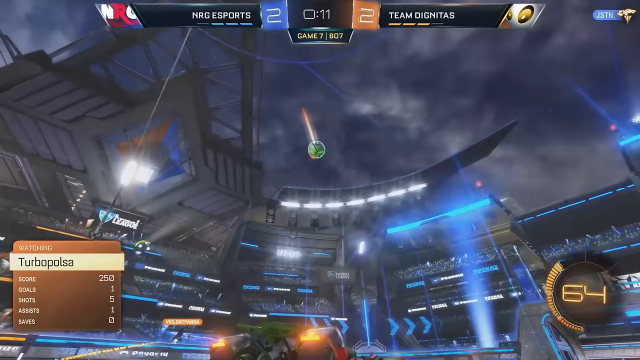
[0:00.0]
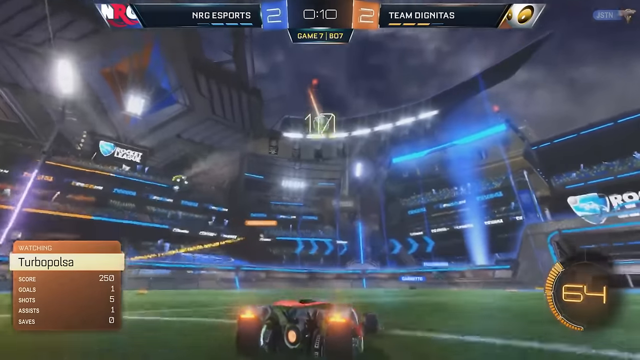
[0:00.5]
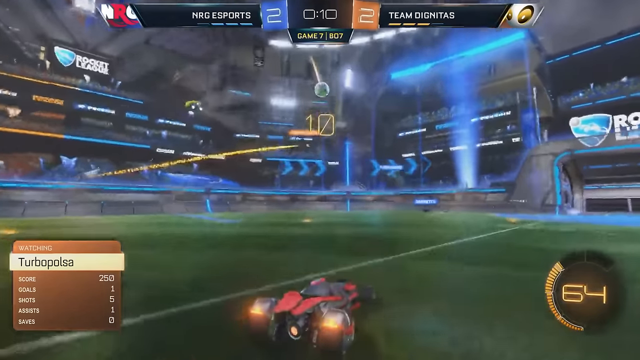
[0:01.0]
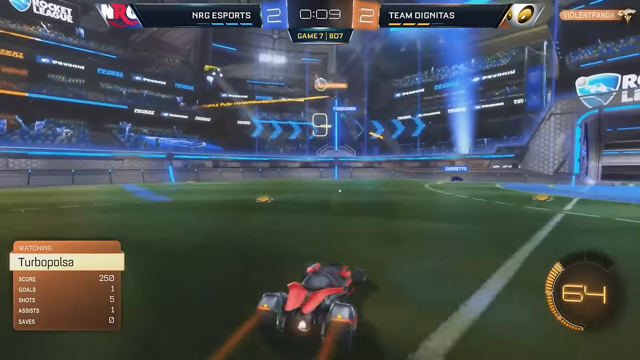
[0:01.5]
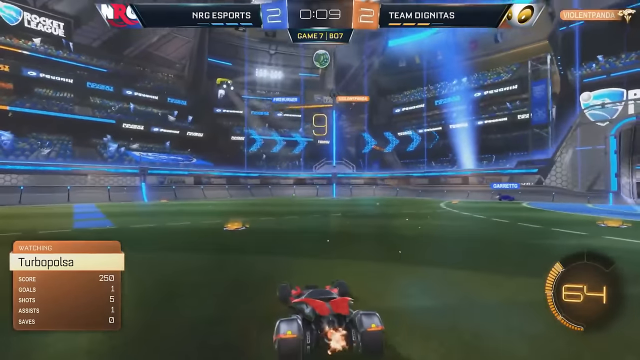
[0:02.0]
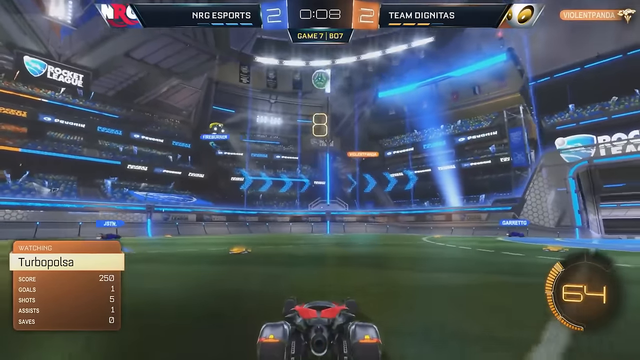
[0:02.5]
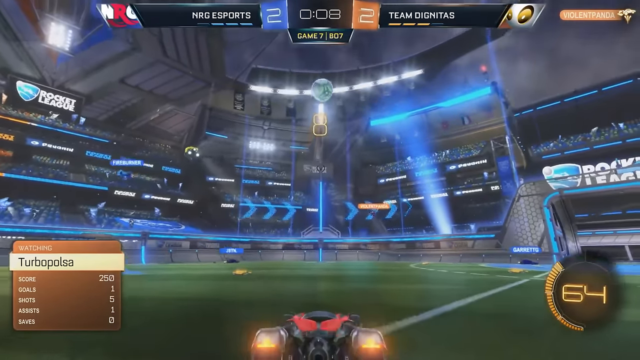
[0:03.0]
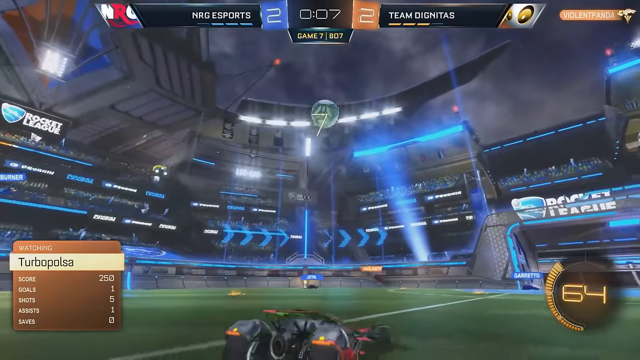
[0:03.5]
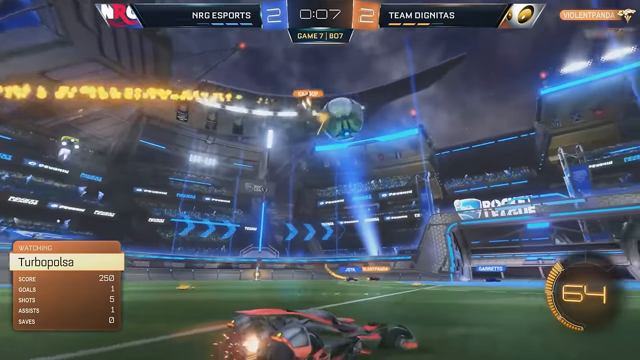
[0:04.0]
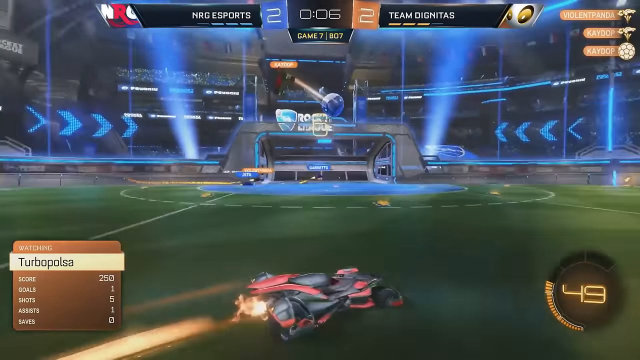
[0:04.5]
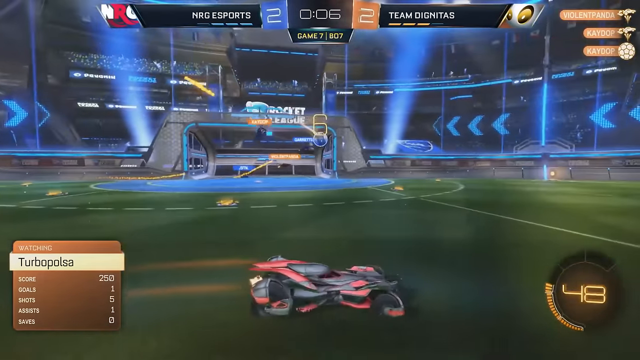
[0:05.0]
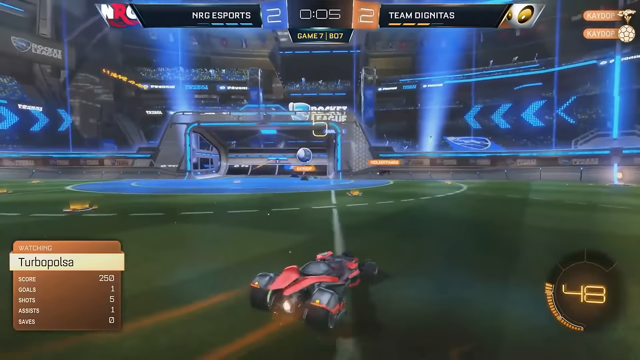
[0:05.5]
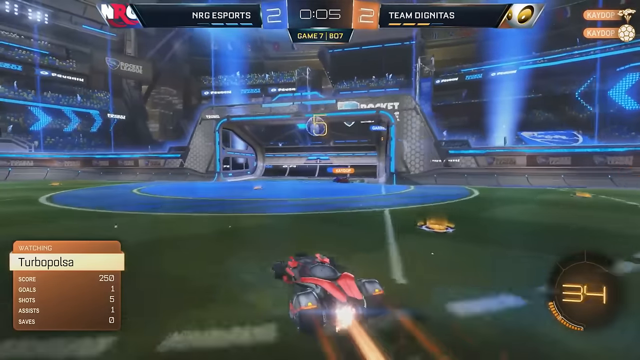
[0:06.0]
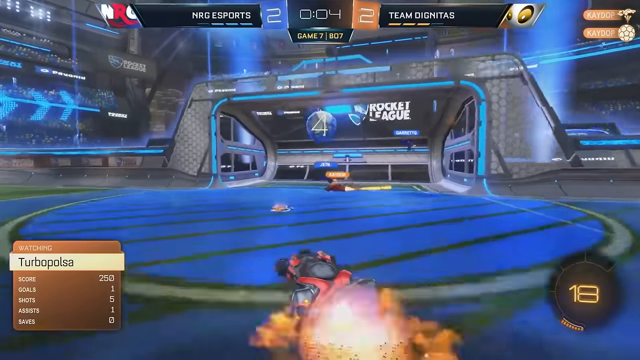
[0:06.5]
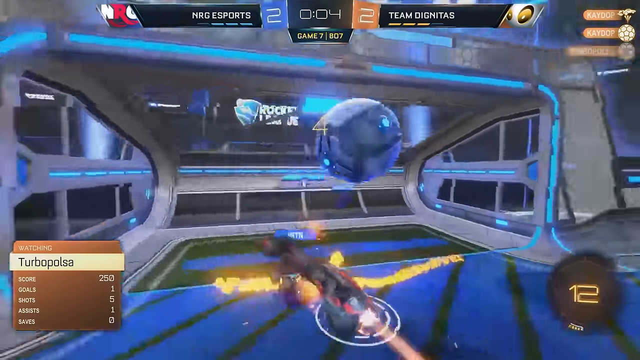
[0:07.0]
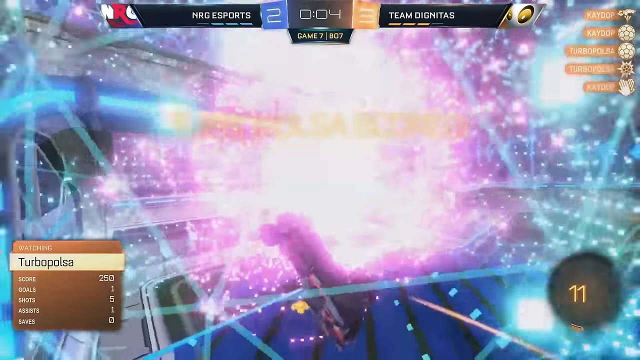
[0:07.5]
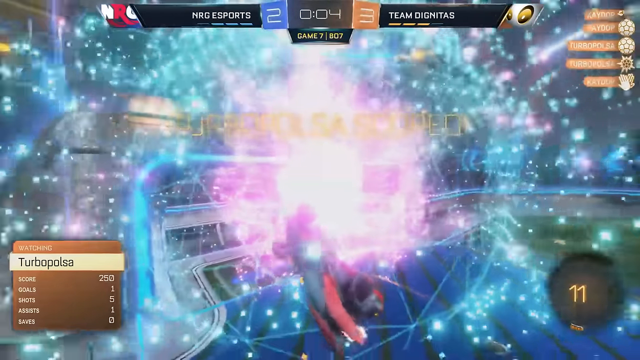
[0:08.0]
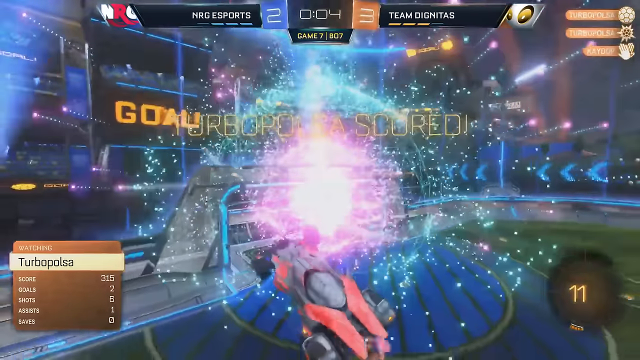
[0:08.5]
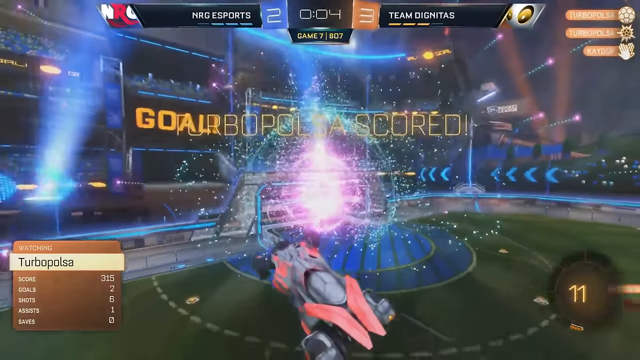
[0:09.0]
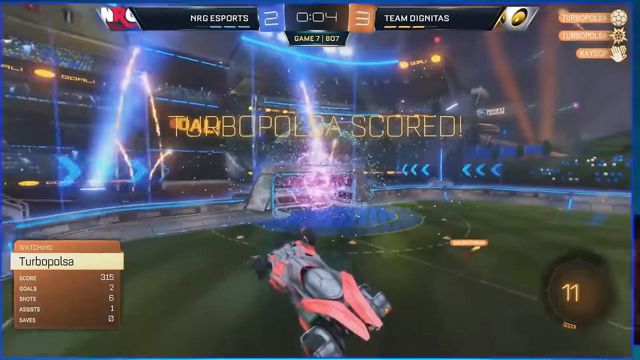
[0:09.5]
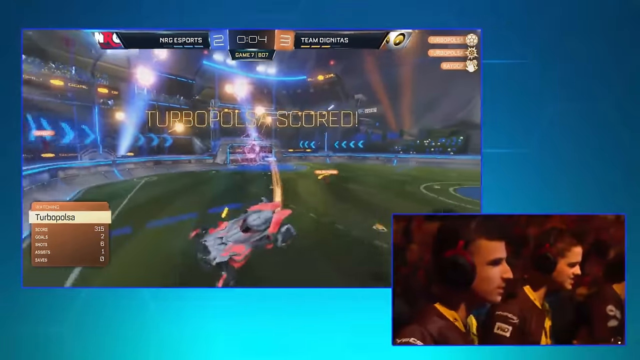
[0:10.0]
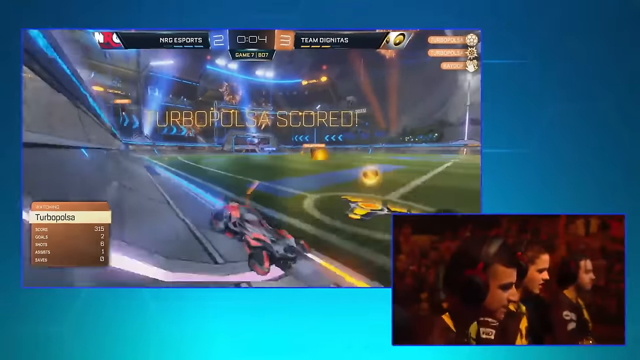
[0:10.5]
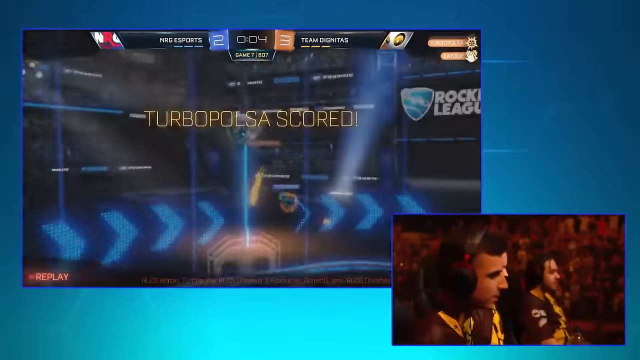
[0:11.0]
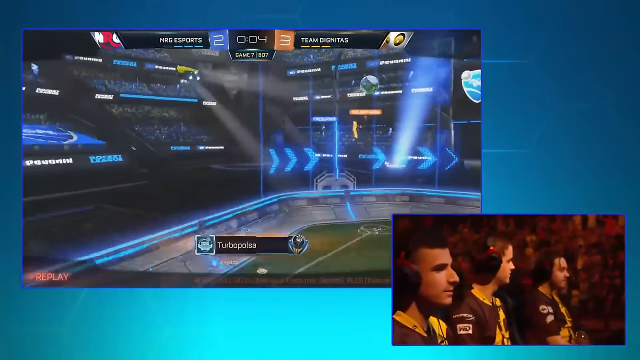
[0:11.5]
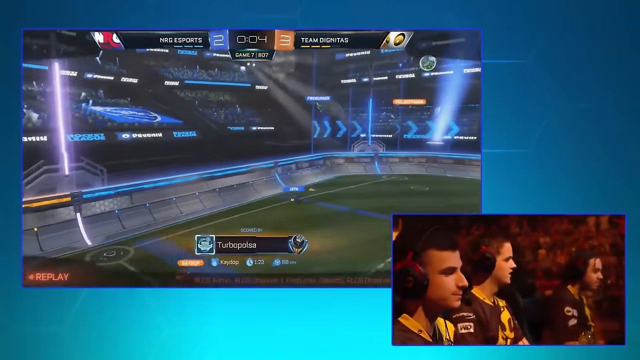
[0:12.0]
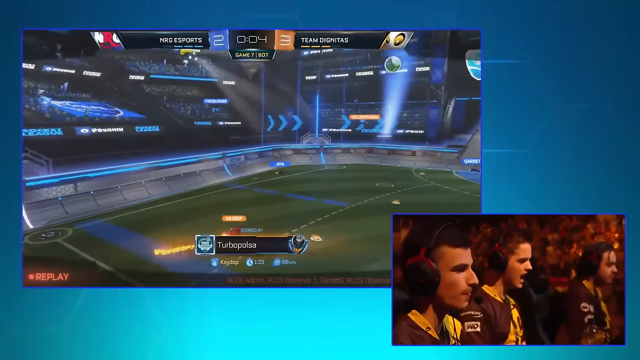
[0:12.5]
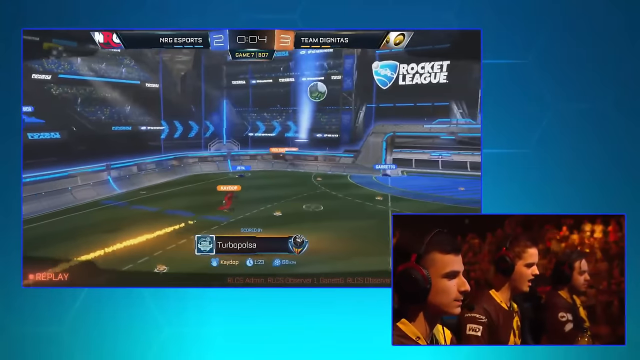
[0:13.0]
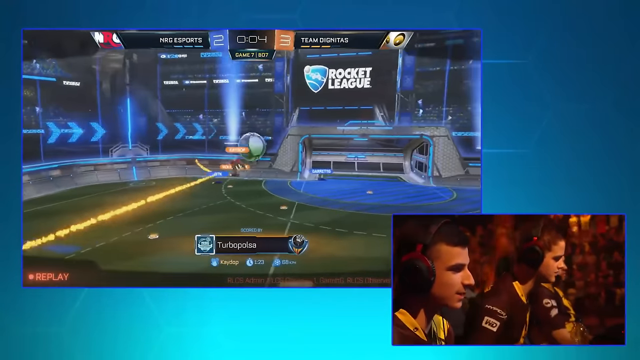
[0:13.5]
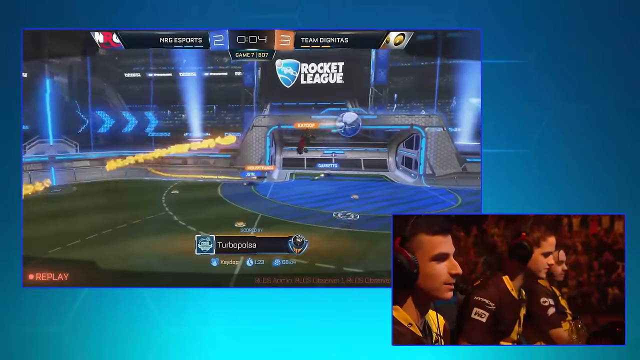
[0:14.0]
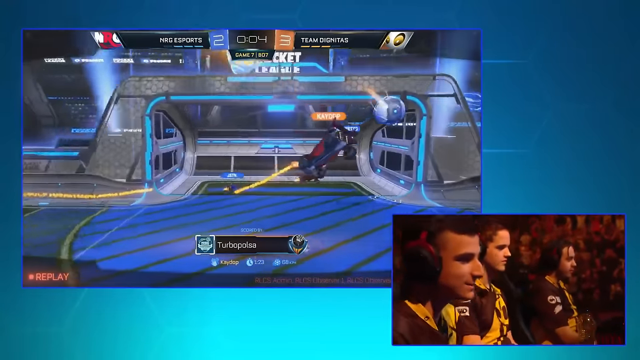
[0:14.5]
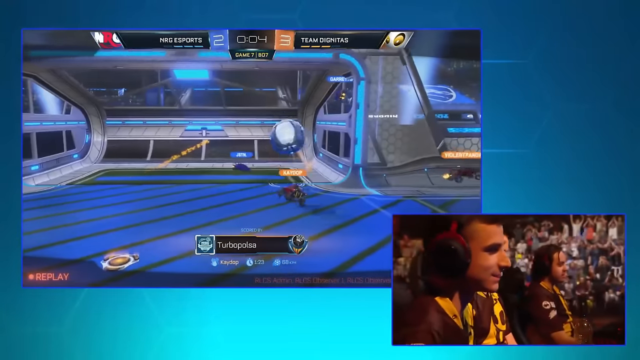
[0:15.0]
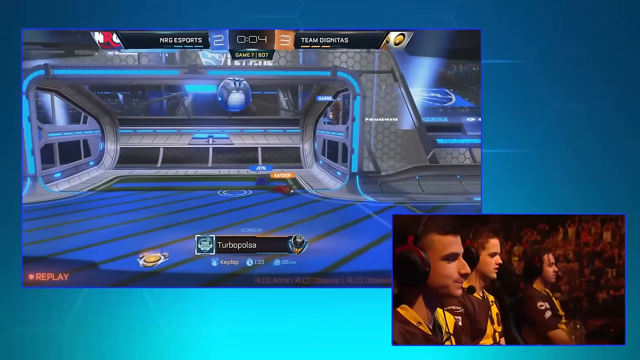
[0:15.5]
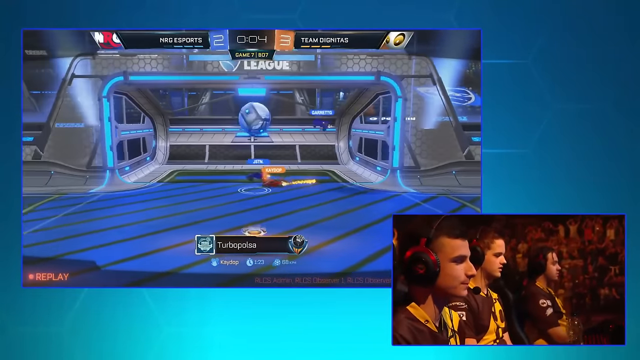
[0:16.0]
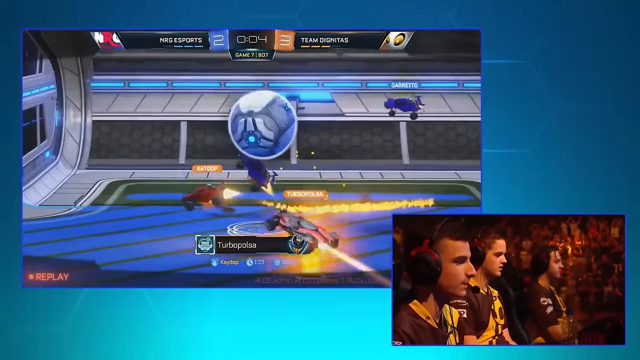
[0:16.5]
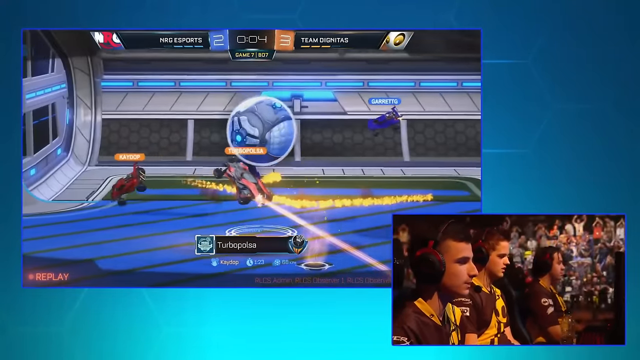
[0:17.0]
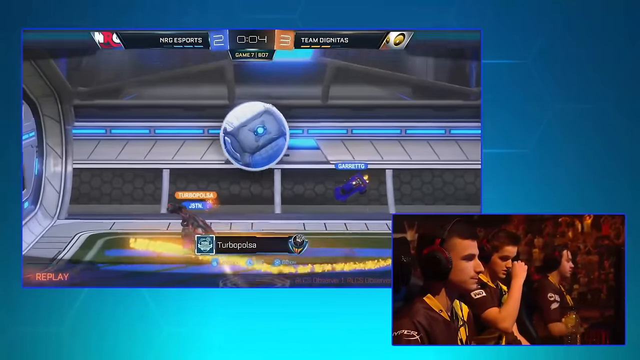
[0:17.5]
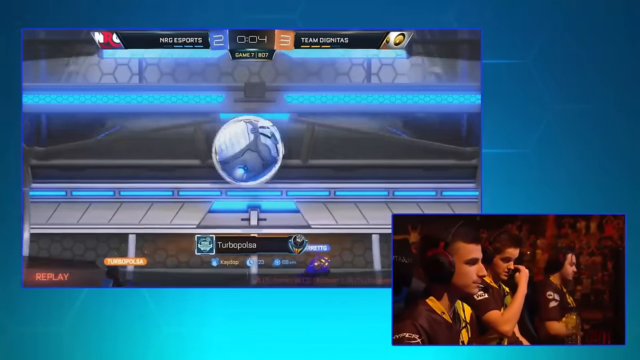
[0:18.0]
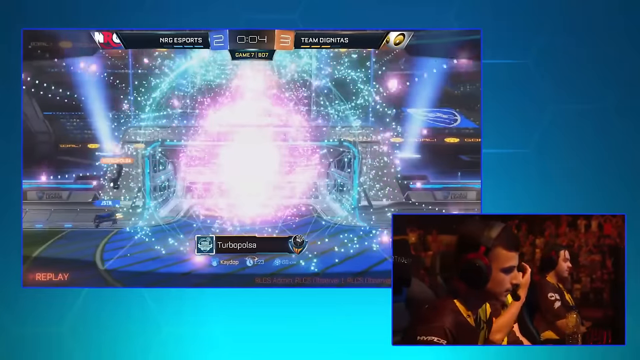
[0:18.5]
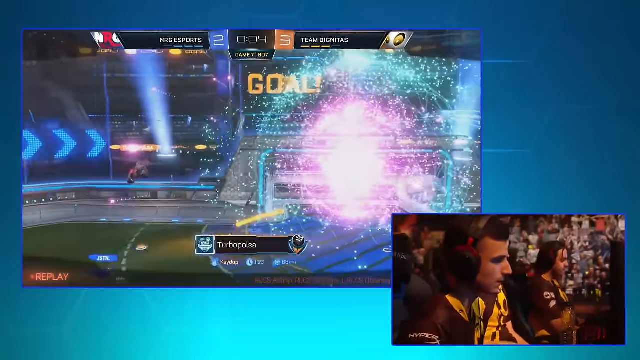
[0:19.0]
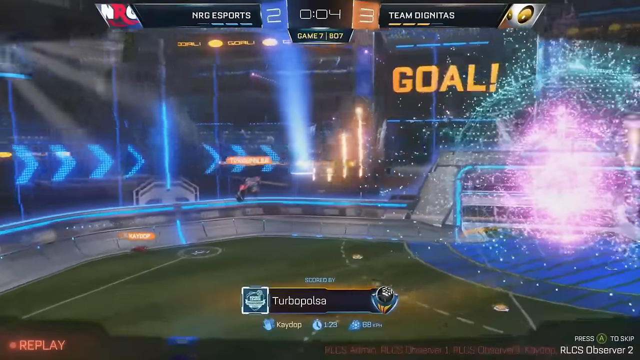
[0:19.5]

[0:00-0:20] The footage comes from an unidentified video game set on what looks like a futuristic football field. Lots of light flashes in the background, and there are neon blue arrows. A countdown timer at the bottom right reads "64." Numerous cars move around the field. One of them hits some sort of glowing blue sphere, setting off a shower of sparks, and a small red car is propelled backwards as "SCORED" appears in gold letters. In the bottom right corner, a group of people sit at a table wearing headphones; they appear to be part of an eSports team and all wear similar red and yellow uniforms. The cars keep moving around the field, occasionally hitting barriers and glowing objects and emitting sparks. The eSports team members are yelling about this, though it is unclear whether they are happy or upset about what has happened.